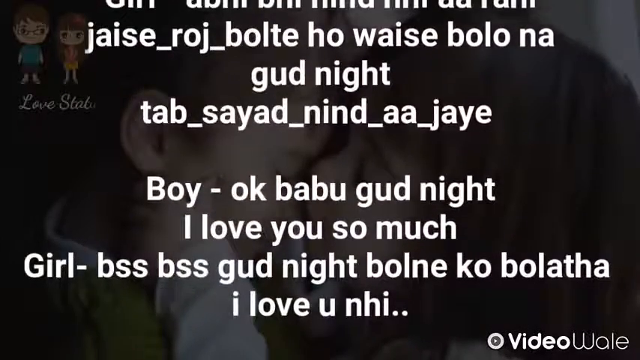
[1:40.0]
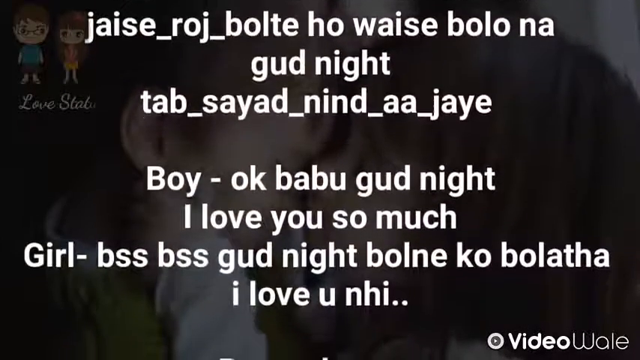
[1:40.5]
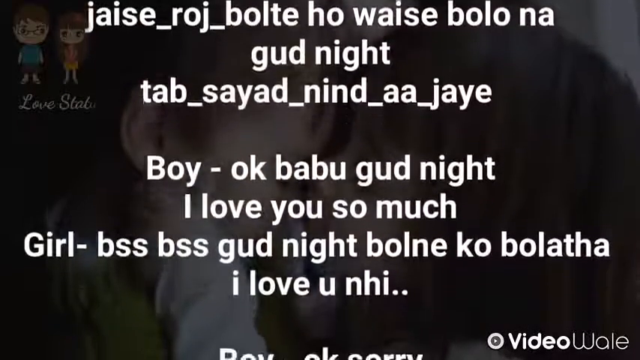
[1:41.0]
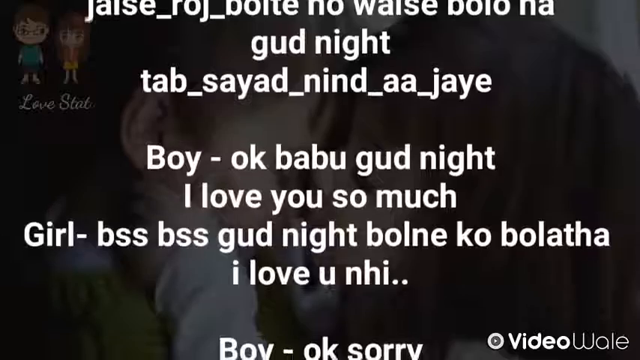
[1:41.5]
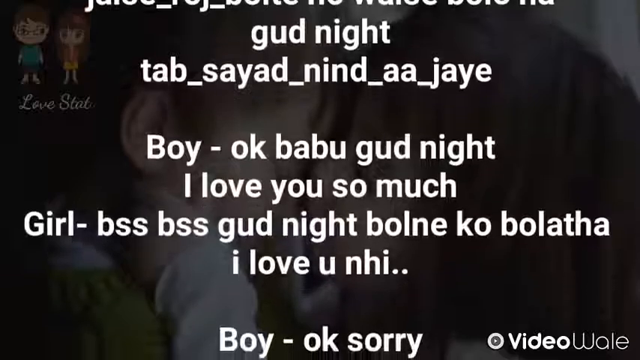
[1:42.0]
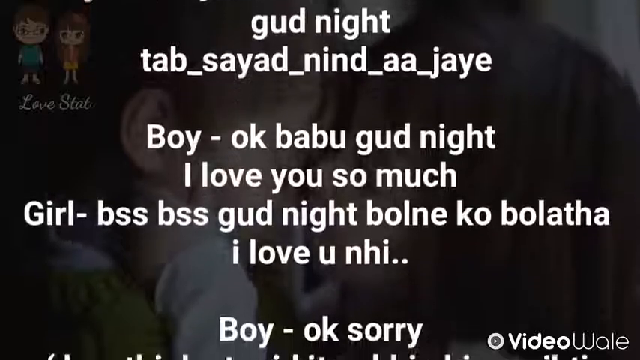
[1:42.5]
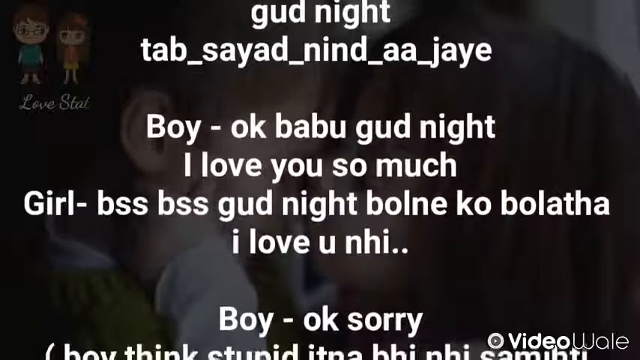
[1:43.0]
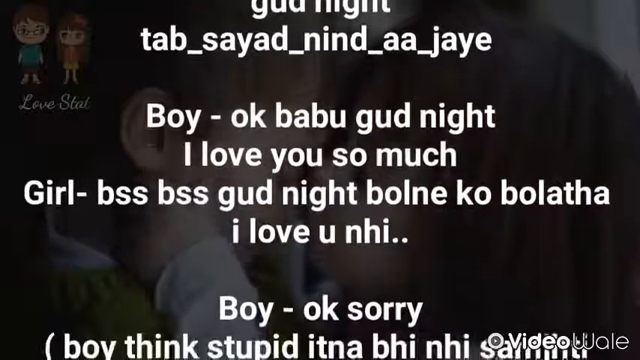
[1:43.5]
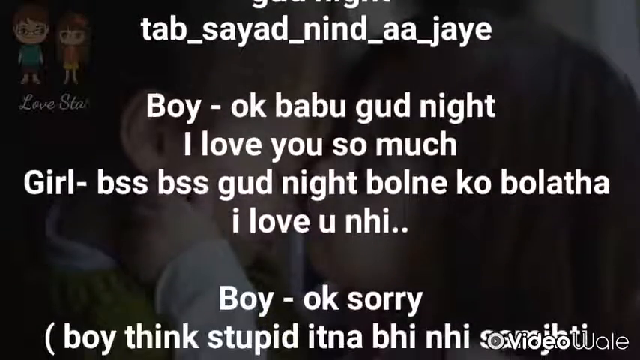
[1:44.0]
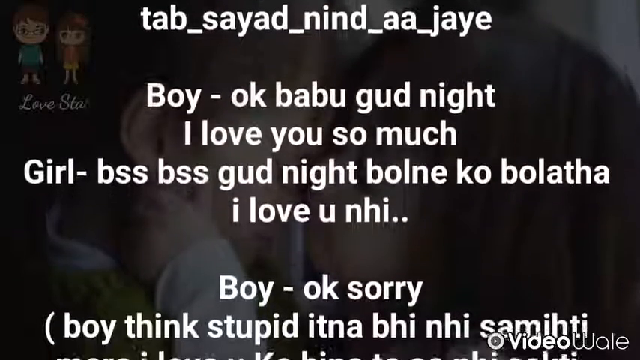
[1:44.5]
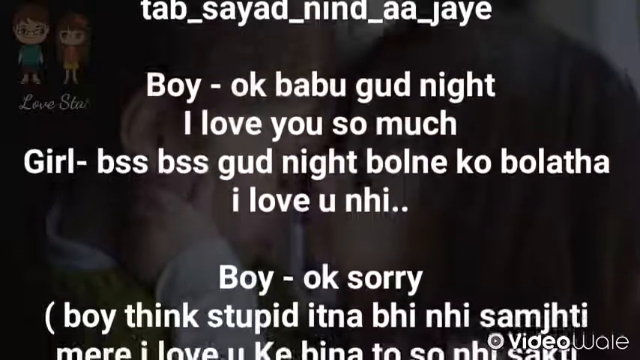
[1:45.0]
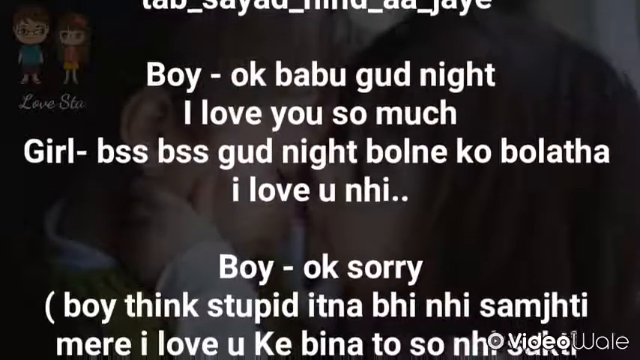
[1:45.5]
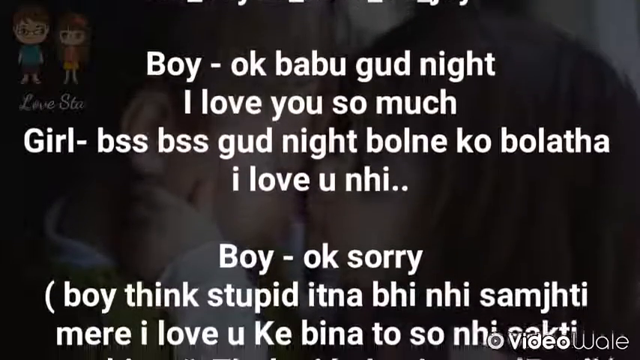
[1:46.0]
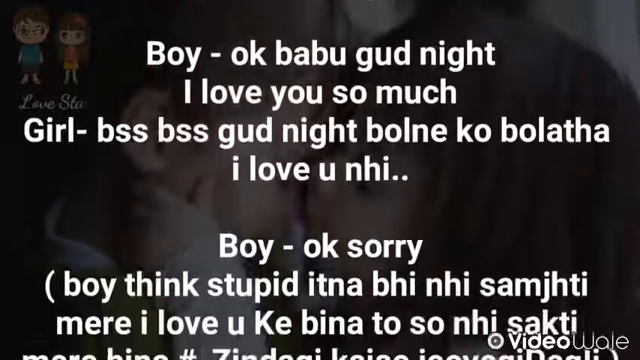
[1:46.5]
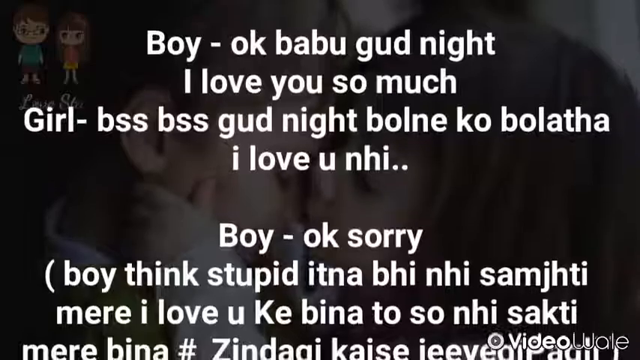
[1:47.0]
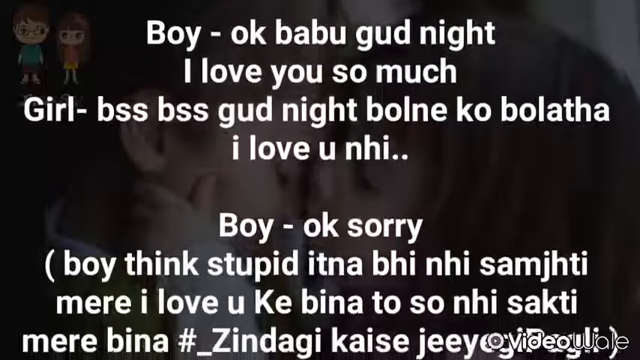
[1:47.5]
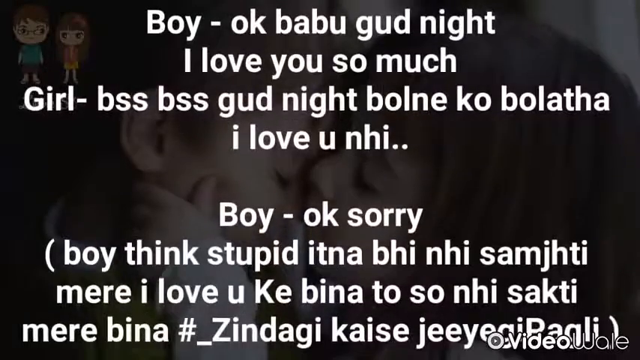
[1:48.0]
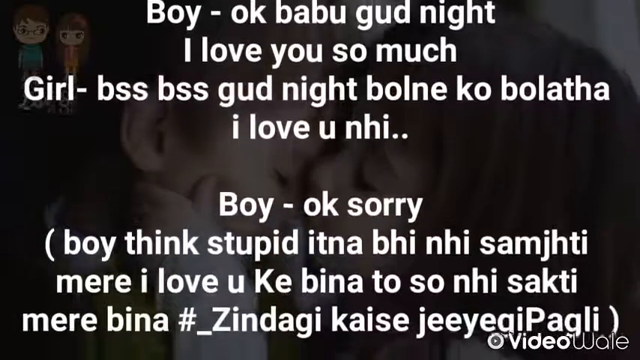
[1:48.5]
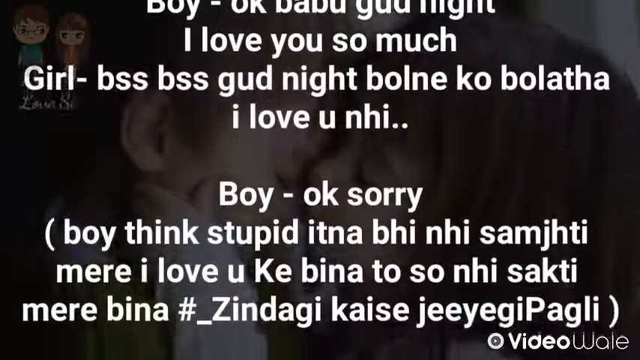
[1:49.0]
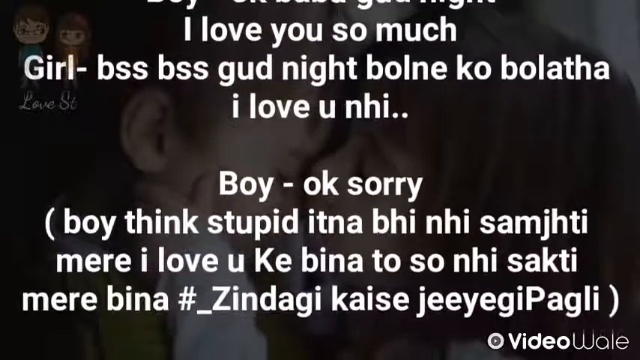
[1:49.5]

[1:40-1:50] The same static background image shows a young girl on the far right and a young boy on the left, both with their eyes closed. The girl has white skin, appears to wear a white long-sleeved shirt, has dark brown hair, and has her hand on the side of the boy's face. The boy has white skin and short hair, even shorter than the girl's. In the top left is a drawing of a boy and a girl standing side by side. The drawn boy, on the left, has glasses, short brown hair, a blue shirt and dark blue shorts. The drawn girl, to his right, has dark brown hair going down toward her back, an orangish shirt and a yellow skirt. Bold white text in a foreign language moves from the bottom of the screen upward, repeatedly showing the words "boy" and "girl", indicating they are talking to each other.